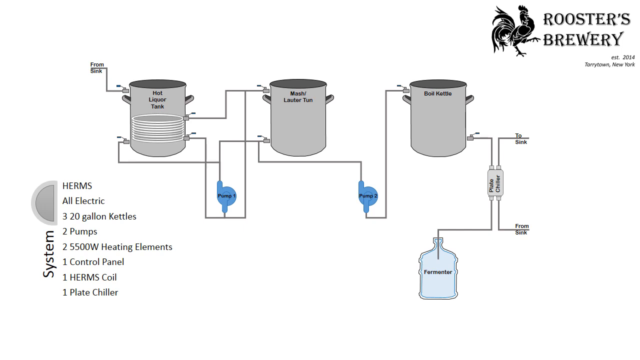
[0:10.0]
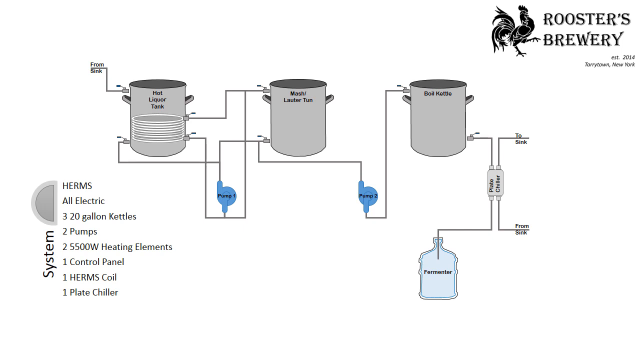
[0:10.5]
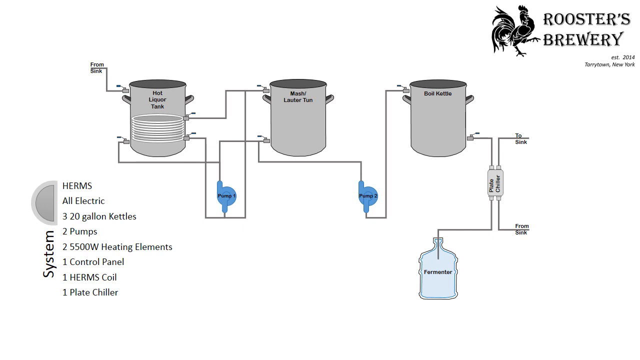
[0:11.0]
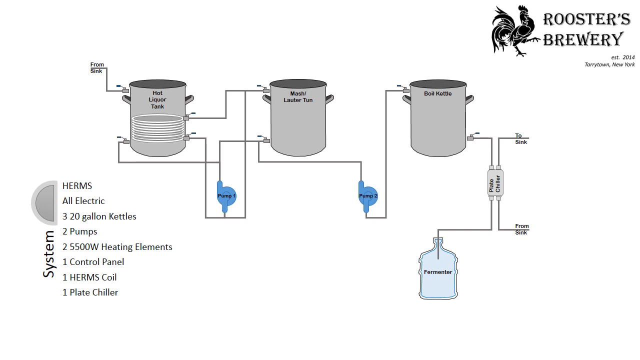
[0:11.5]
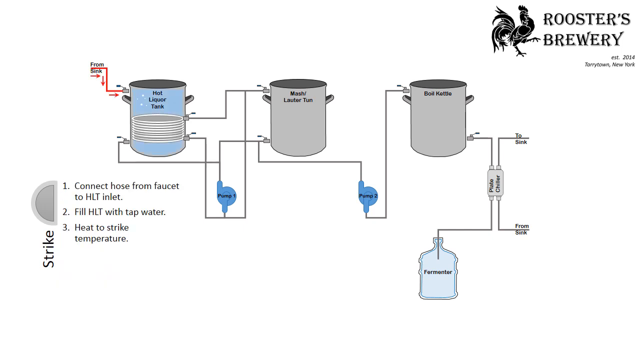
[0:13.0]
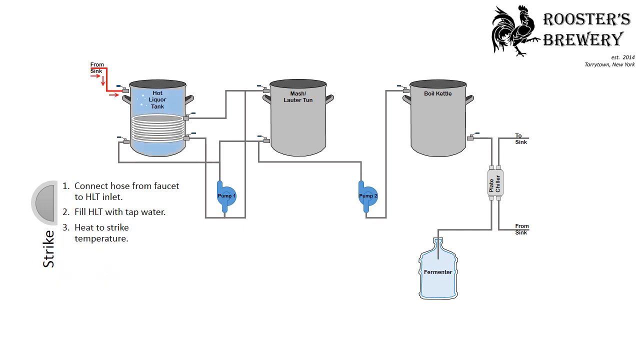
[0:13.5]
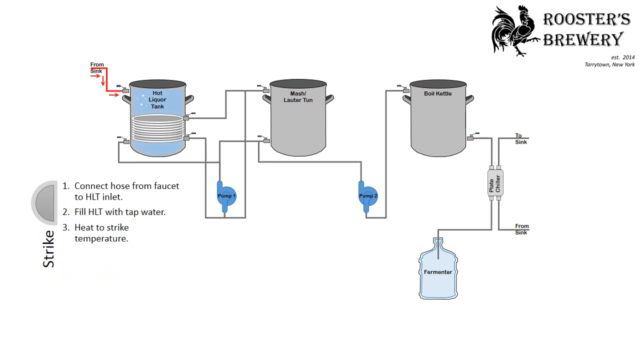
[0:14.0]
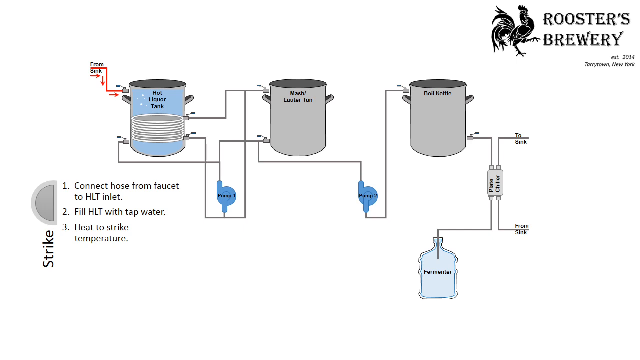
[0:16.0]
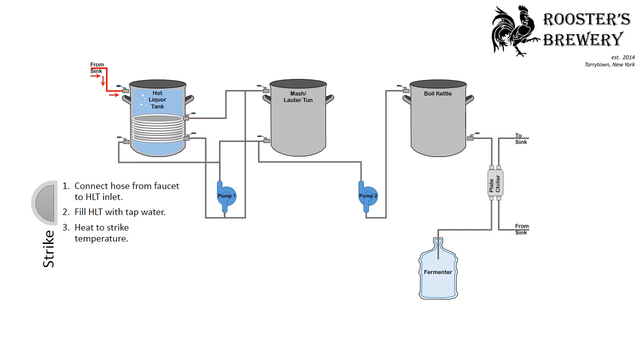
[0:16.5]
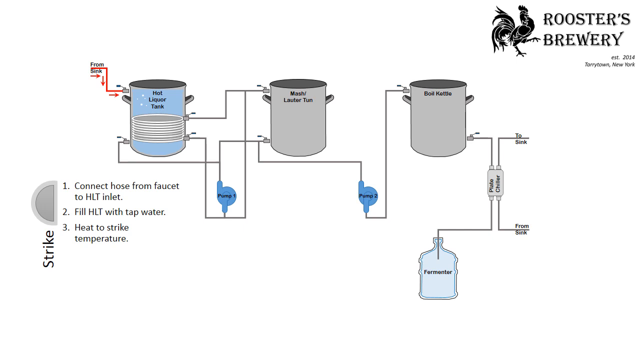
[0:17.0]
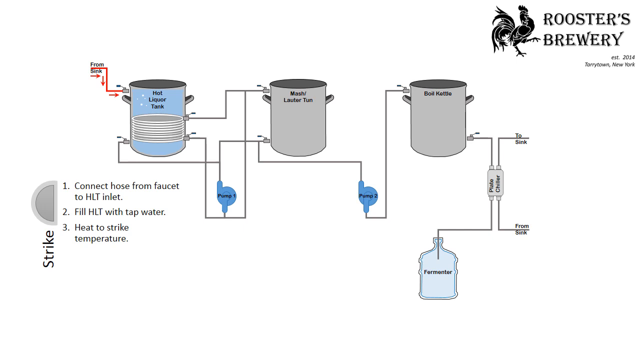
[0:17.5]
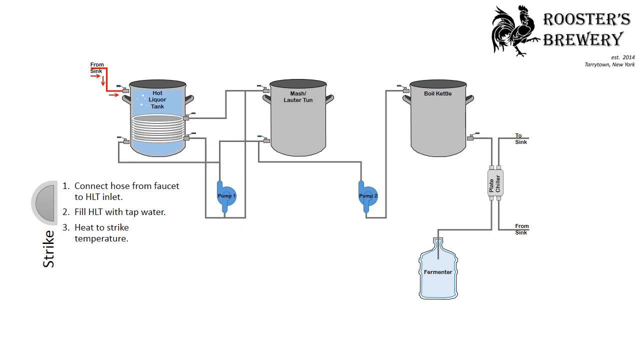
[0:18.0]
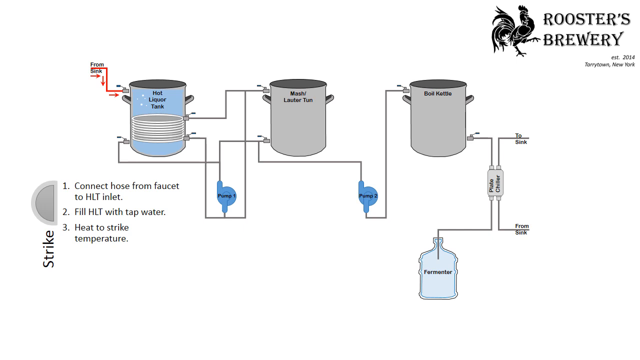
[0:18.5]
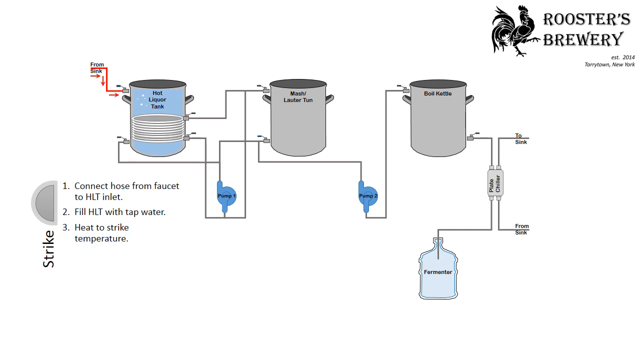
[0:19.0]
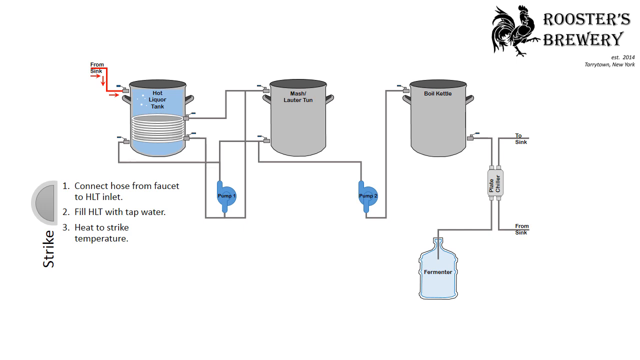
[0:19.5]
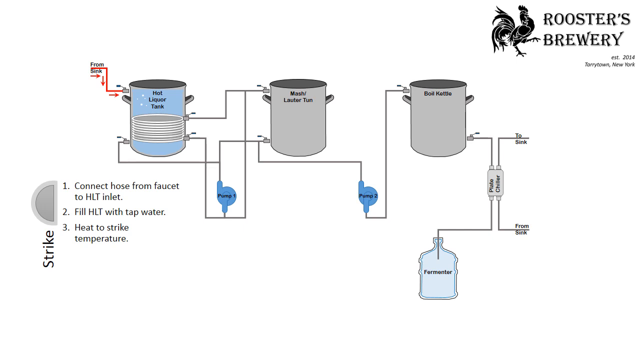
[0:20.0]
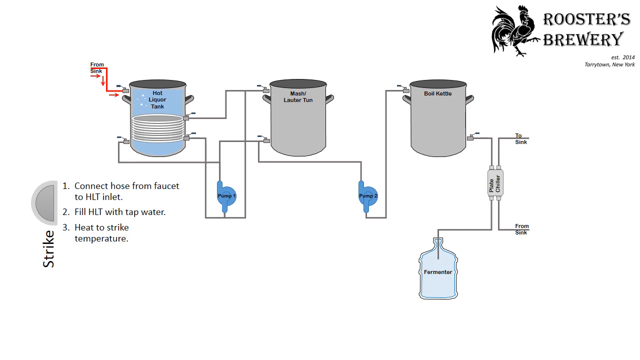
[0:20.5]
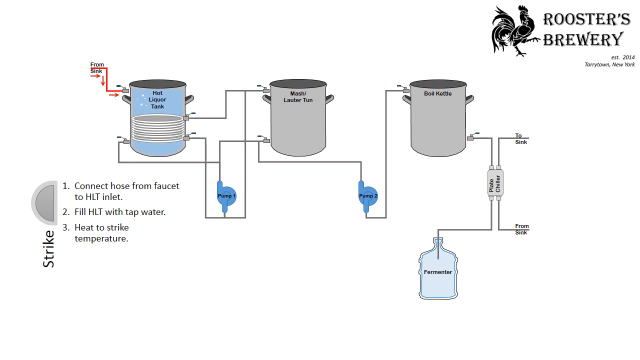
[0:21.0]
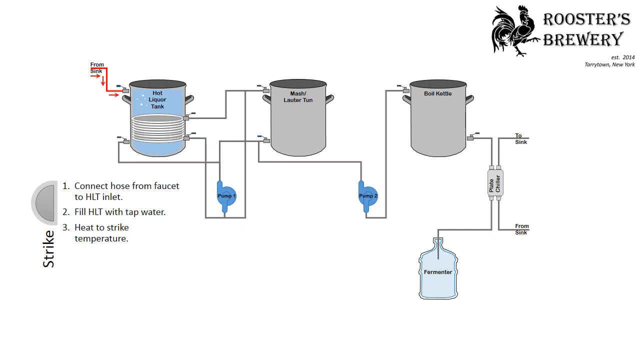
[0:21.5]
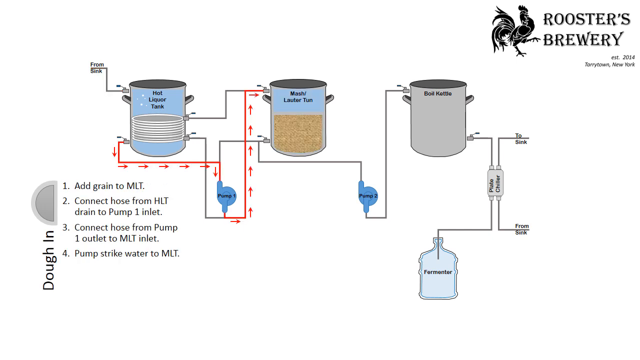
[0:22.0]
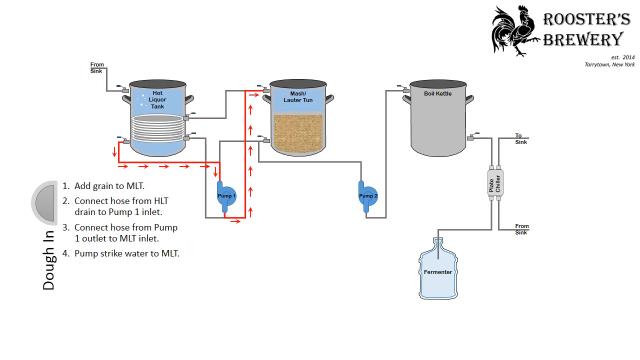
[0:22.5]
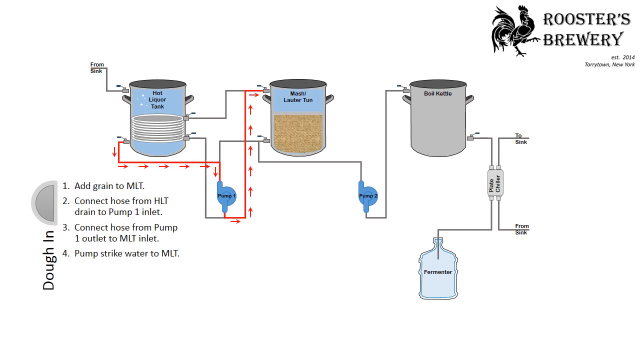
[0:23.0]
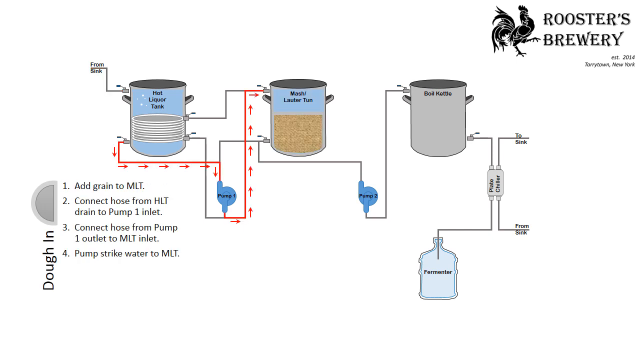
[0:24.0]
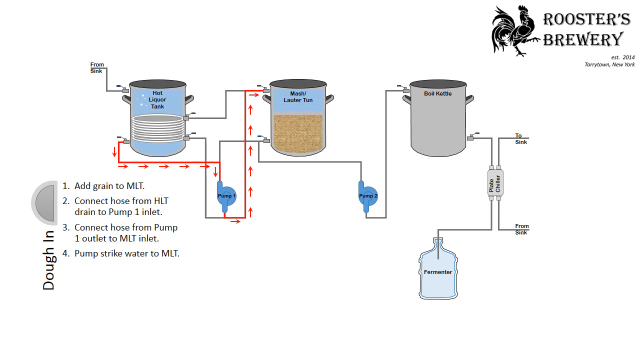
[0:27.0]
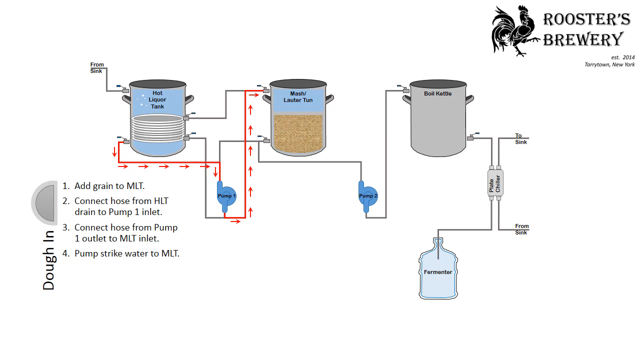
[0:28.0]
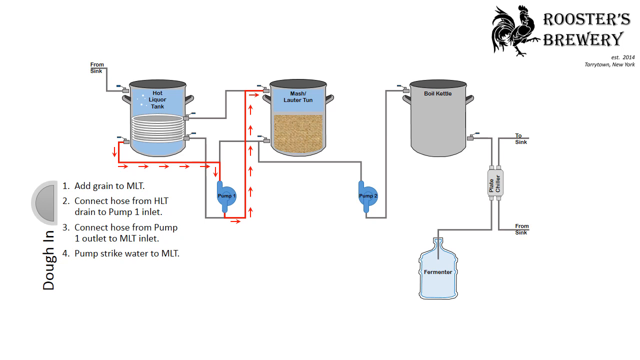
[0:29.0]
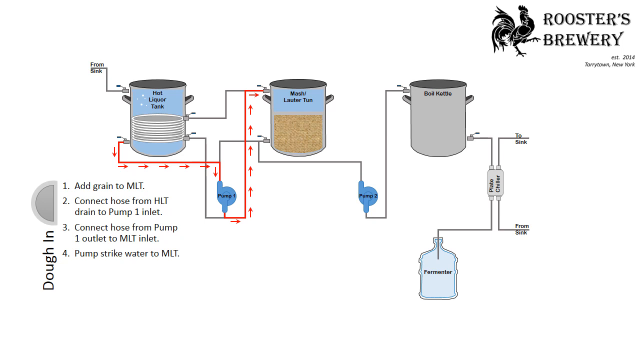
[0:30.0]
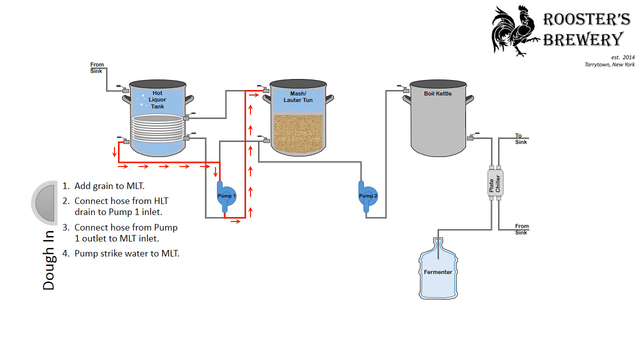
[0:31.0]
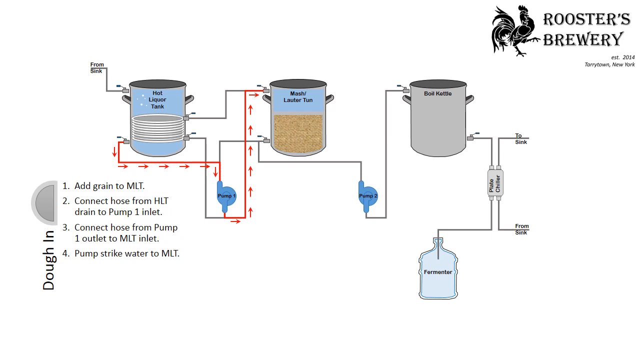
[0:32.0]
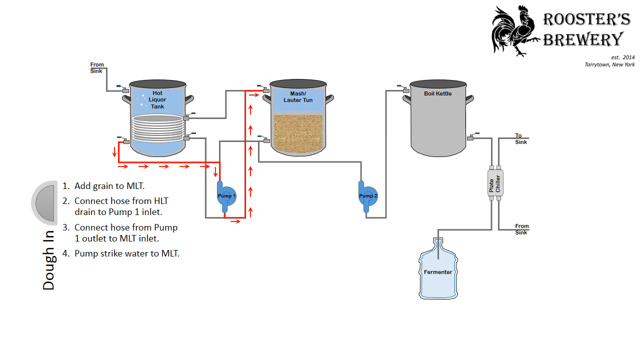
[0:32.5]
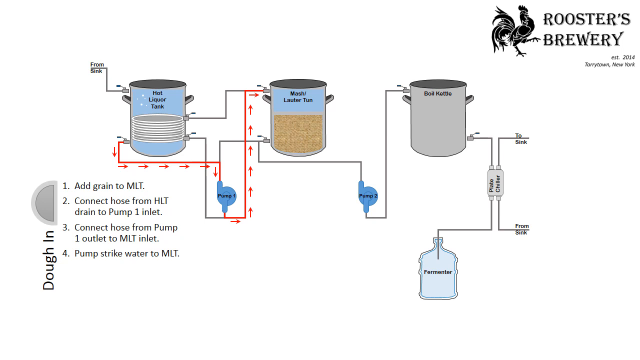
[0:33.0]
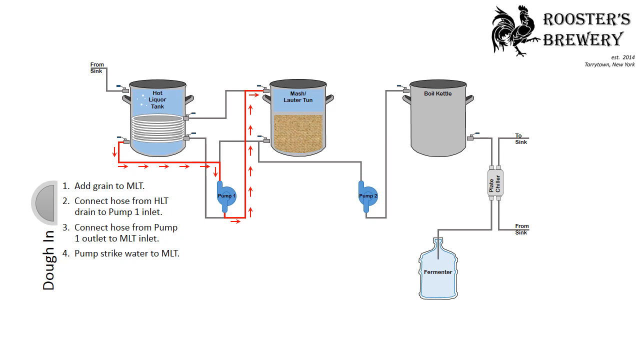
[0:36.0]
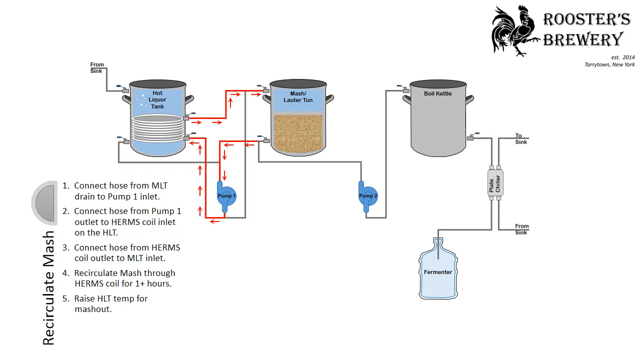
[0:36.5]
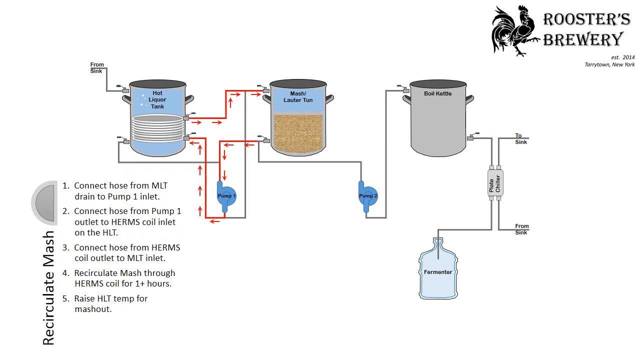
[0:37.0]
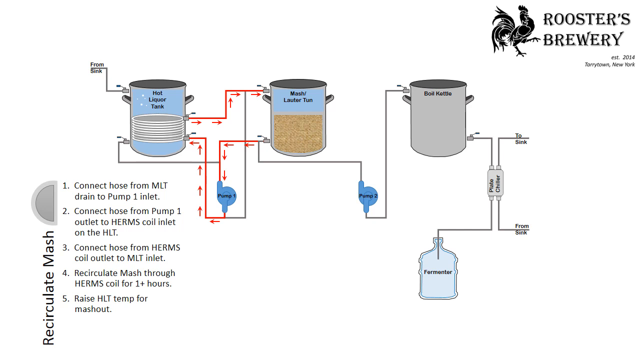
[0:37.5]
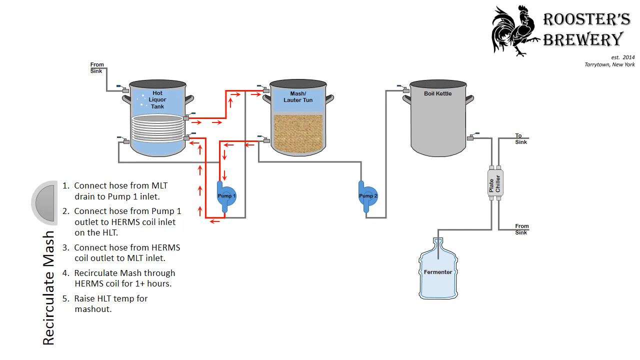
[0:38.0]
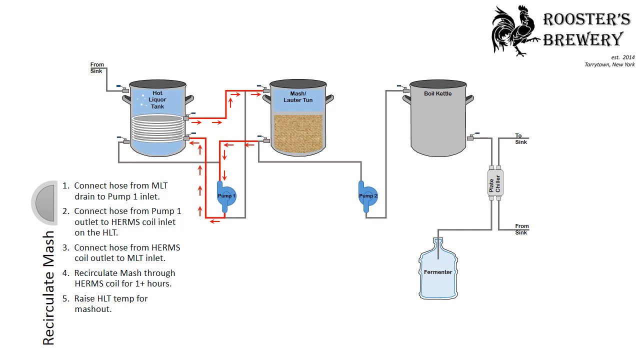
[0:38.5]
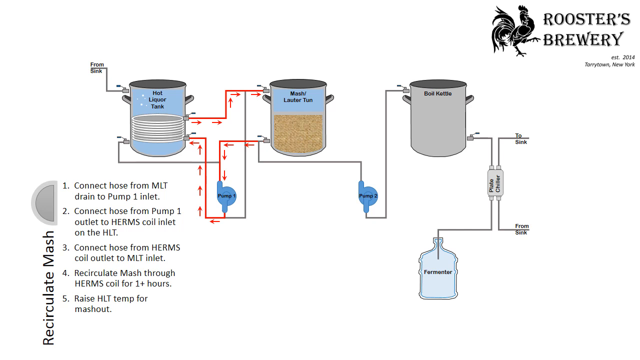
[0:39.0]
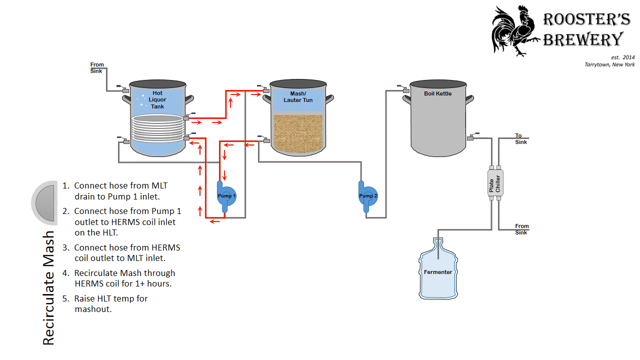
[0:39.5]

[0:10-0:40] The same system continues, now with extra steps for brewing. The upper left path turns red, with arrows showing flow from the sink into the hot liquor tank. Steps read "connect hose from faucet to HLT inlet" and "fill the HLT with tap water and heat to strike temperature." Next, an output on the lower left part of the hot liquor tank sends the liquid into pump 1, which pumps it into the MLT. The steps read "add grain to MLT", "connect hose from HLT drain to pump 1 inlet", "connect hose from pump 1 outlet to MLT inlet" and "pump strike water to MLT." The illustration shows each step of the process.